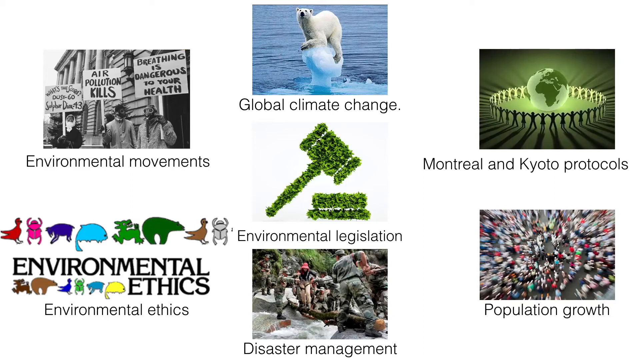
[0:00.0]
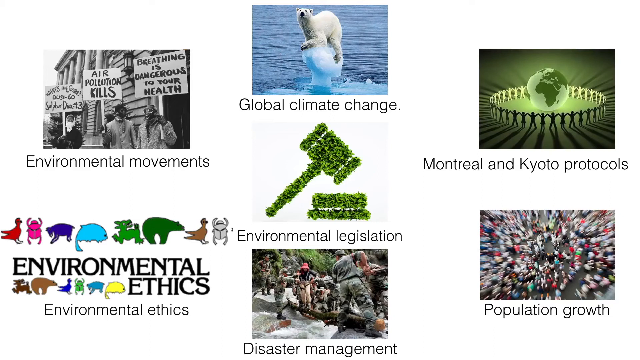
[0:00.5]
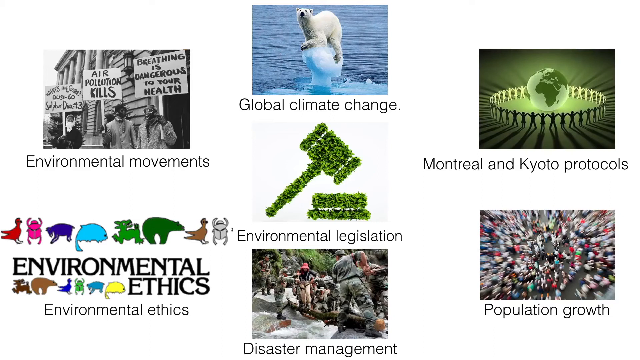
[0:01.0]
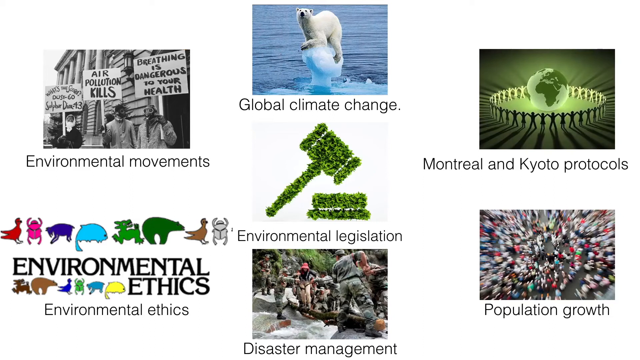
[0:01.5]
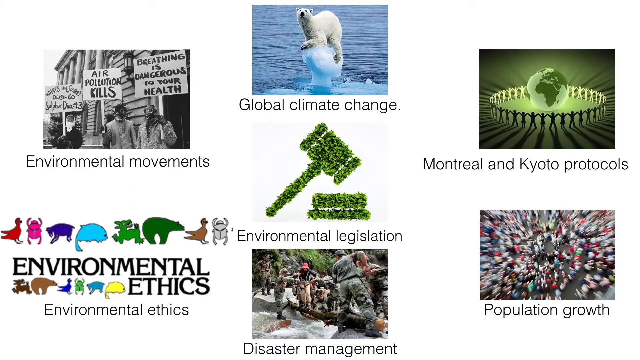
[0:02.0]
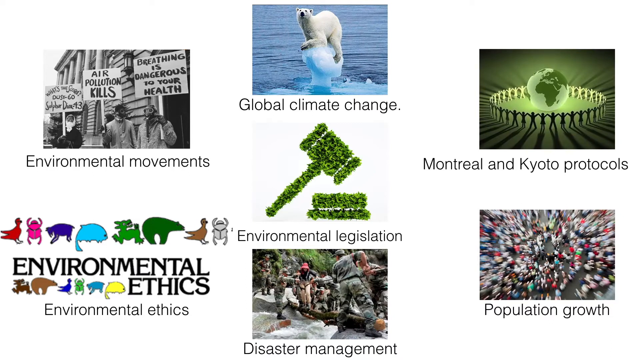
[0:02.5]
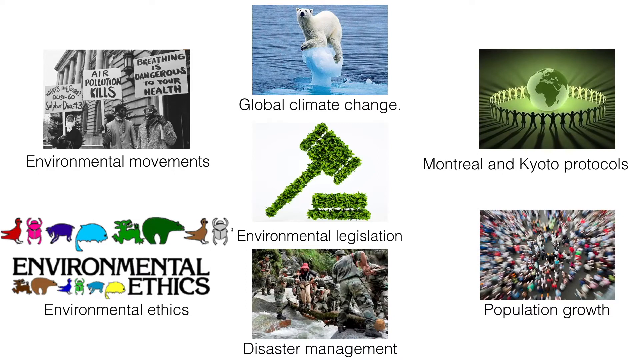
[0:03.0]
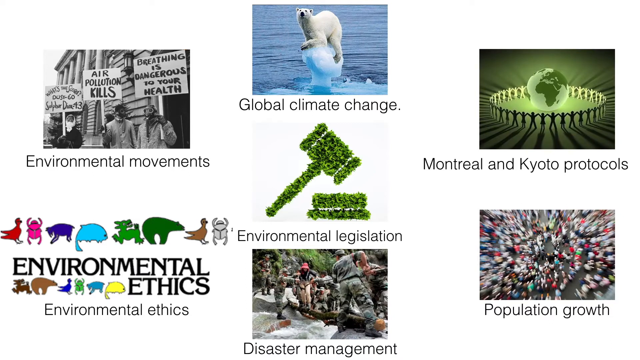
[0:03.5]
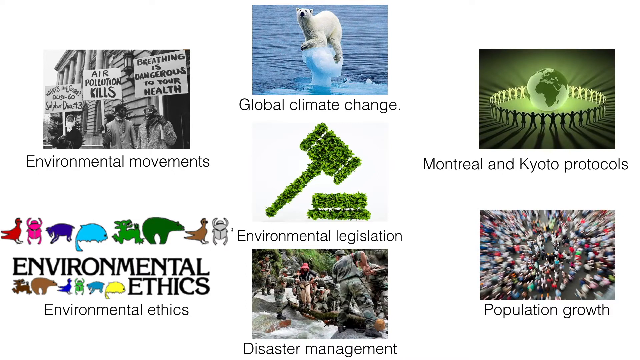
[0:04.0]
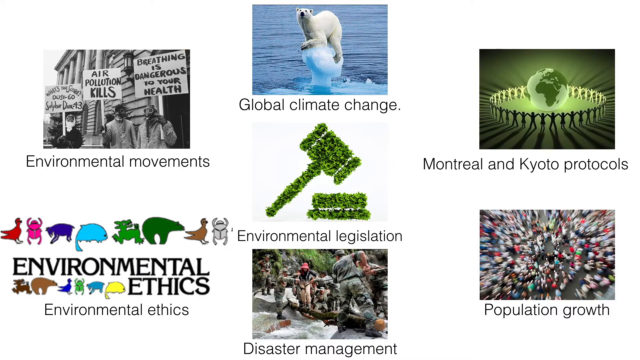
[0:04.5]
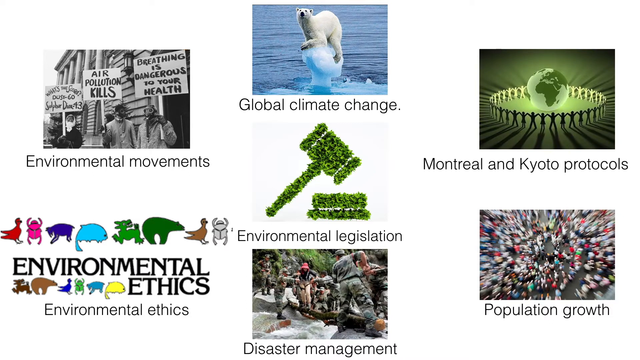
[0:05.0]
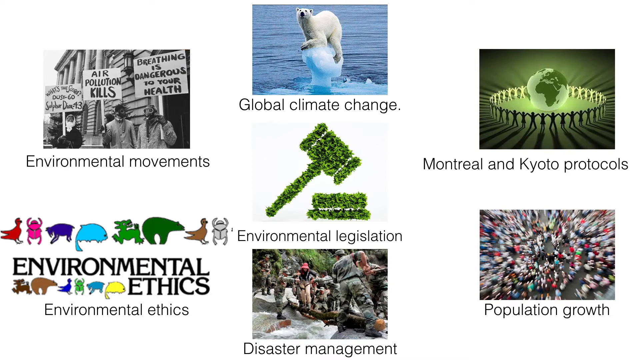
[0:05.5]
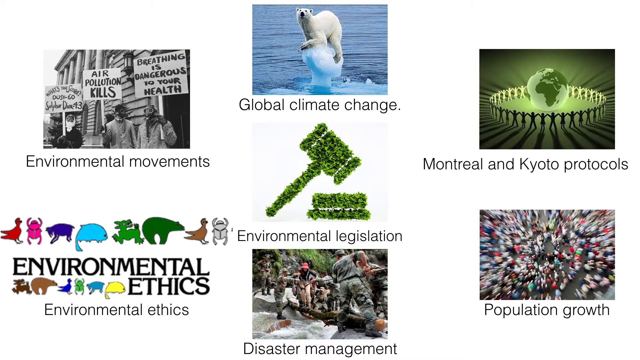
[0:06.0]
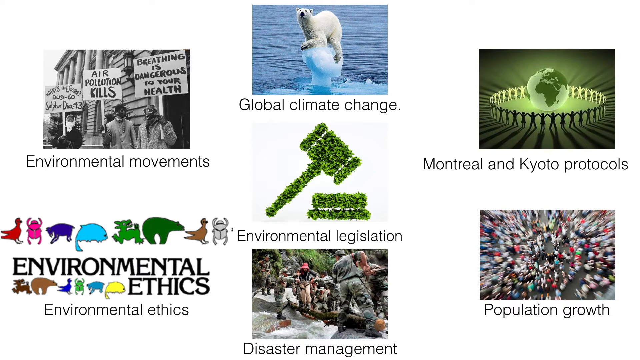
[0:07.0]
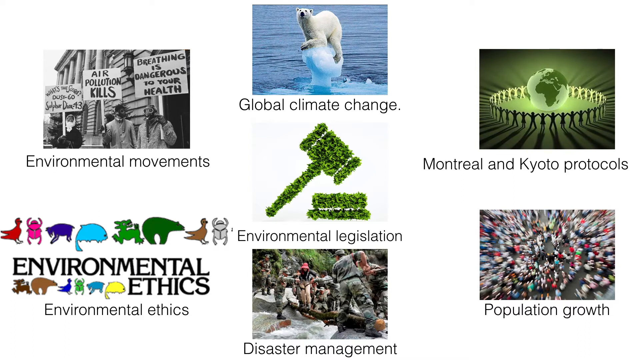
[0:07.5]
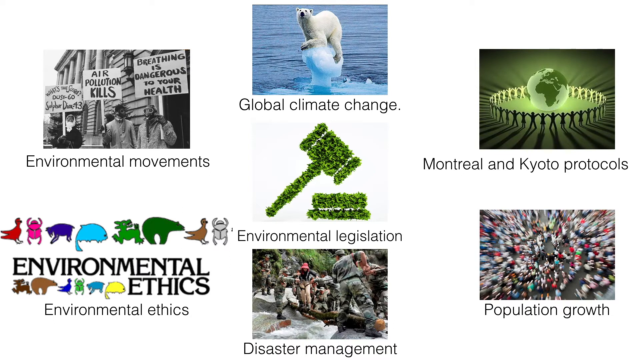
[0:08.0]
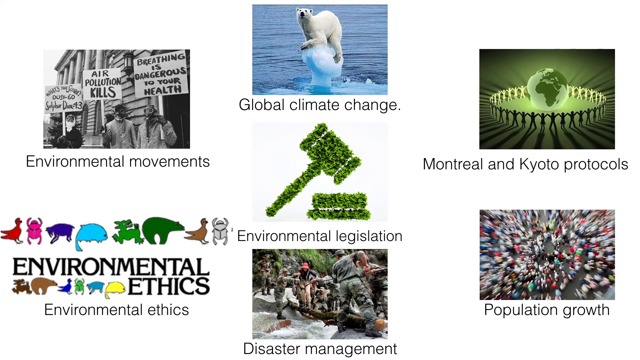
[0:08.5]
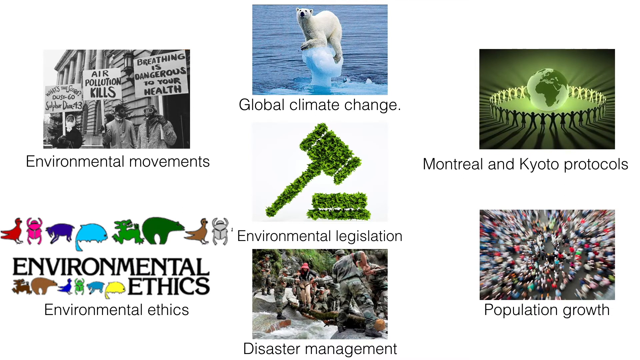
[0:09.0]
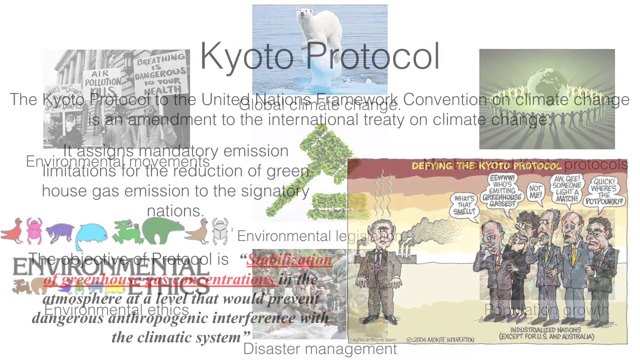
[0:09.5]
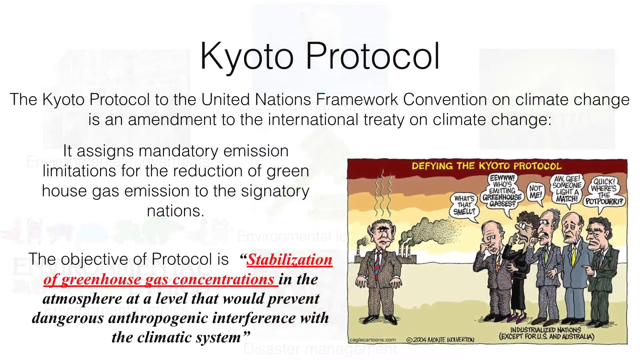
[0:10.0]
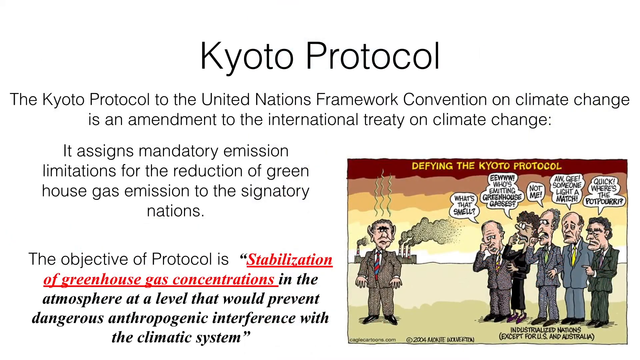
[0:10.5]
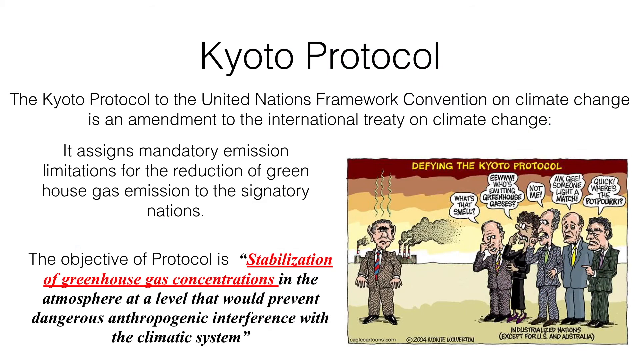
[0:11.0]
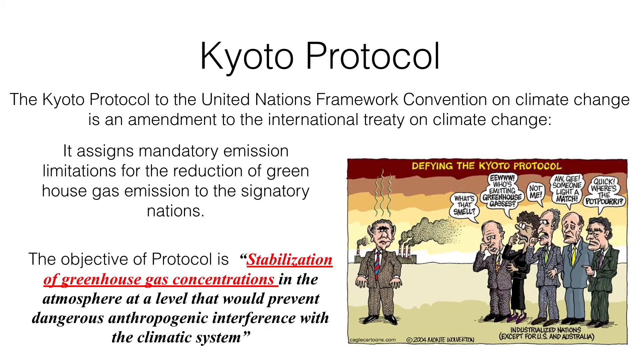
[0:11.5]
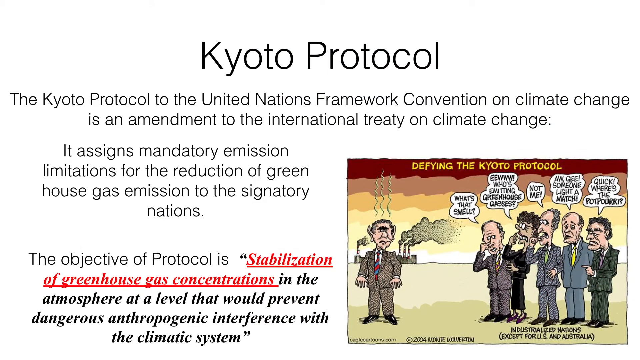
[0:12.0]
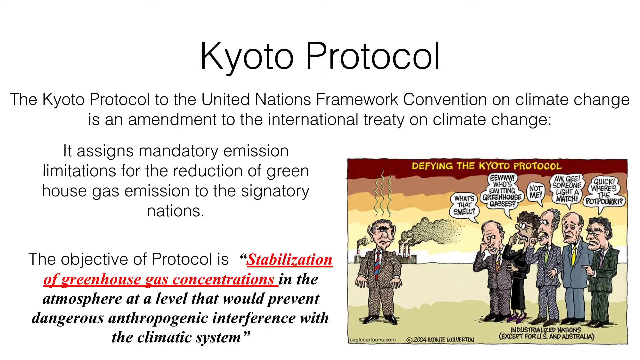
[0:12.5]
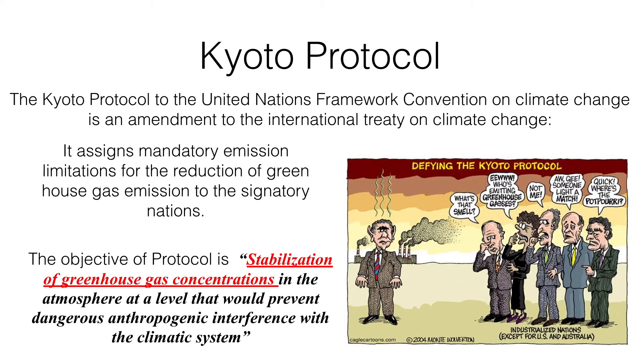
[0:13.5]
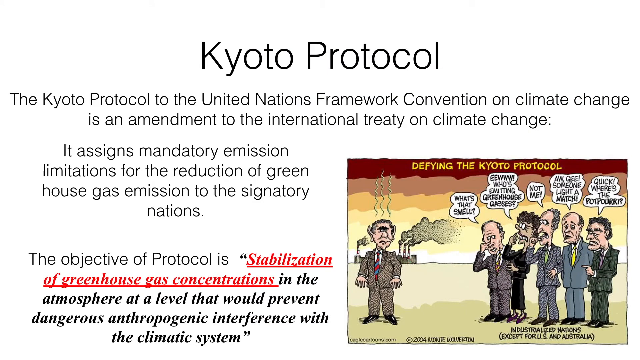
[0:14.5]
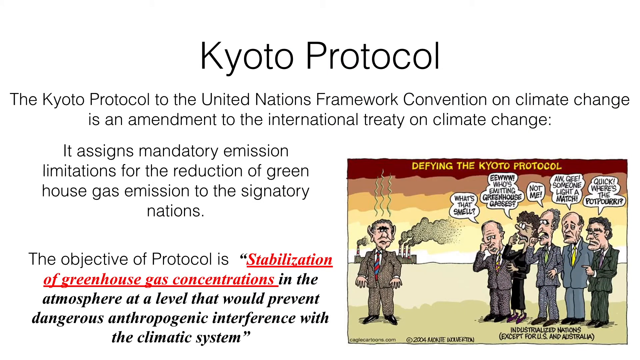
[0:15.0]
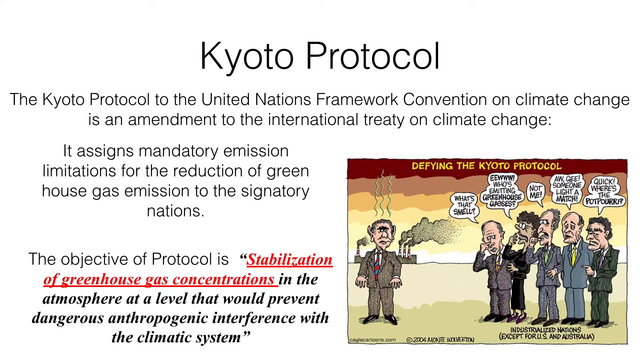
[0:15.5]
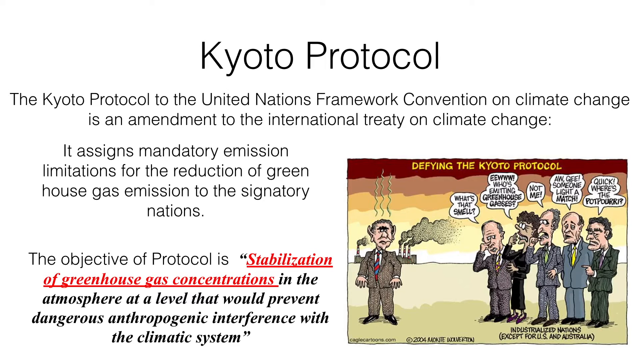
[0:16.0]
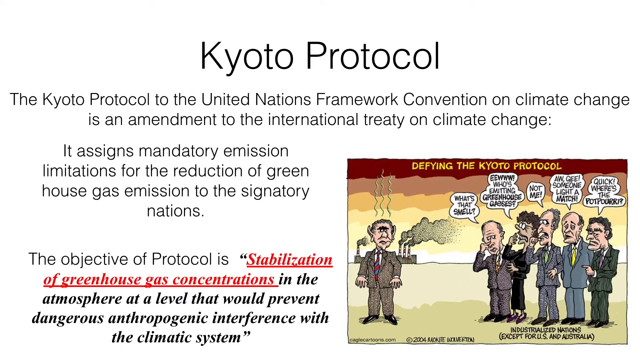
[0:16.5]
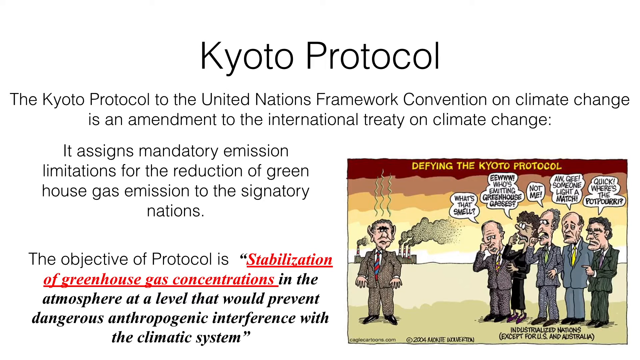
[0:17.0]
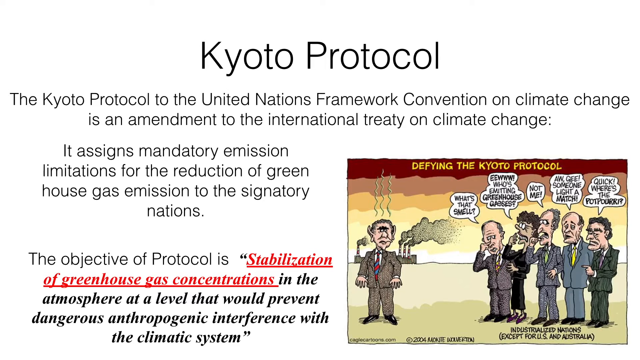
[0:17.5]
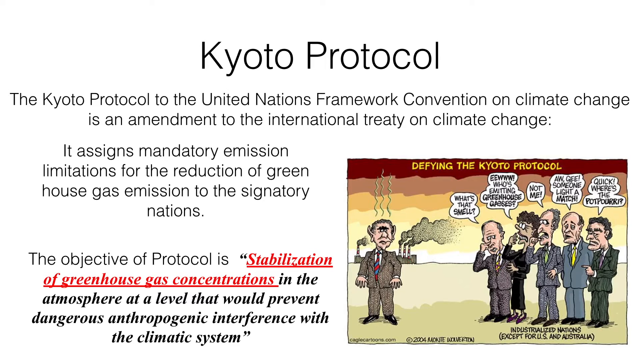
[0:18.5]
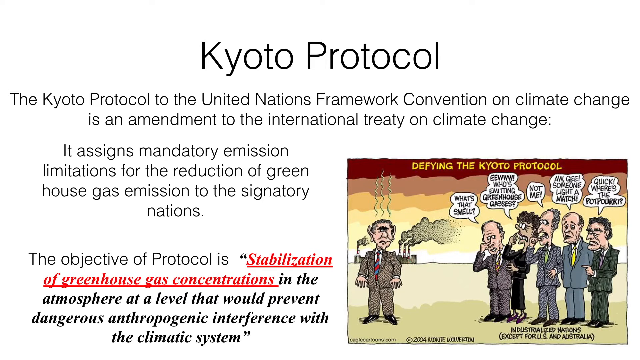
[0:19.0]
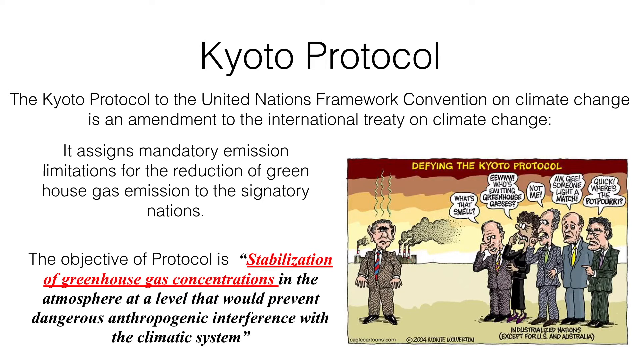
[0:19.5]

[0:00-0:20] The video opens on what looks like a webpage with six icons arranged in a circle, each with a title below it indicating that clicking it leads to information on that subject. The subjects are environmental movements, global climate change, Montreal and Kyoto protocols, population growth, environmental legislation, and environmental ethics. In the center of the circle is a gavel that looks like it is made of green leaves. The scene then switches to what looks like a page on a website with a header reading "Kyoto Protocol." On the lower right is a political cartoon that says "Defying the Kyoto Protocol." It shows a man on the left standing in front of a factory that is belching out smoke, with what looks like steam coming out of the top of his head. On the right side are five people who look like they are holding their noses, with text bubbles above each of them saying things like "What's that smell?", "Eww! Who's emitting greenhouse gases," and "Not me." On the left side of the page is text explaining what the Kyoto Protocol is.